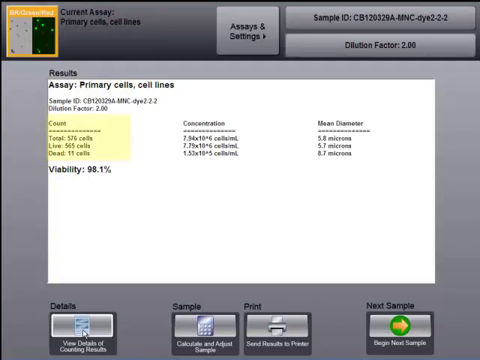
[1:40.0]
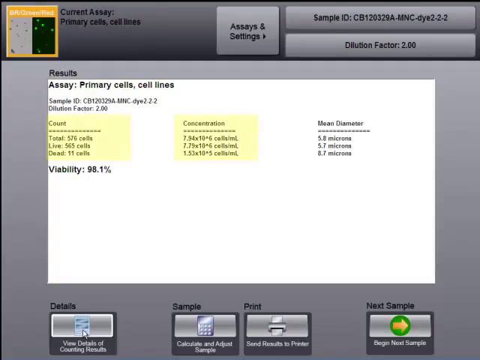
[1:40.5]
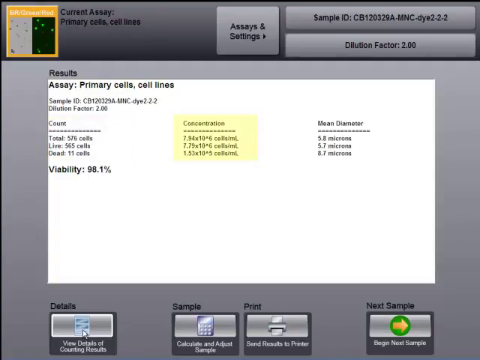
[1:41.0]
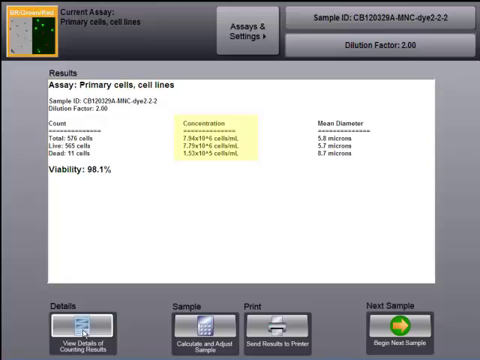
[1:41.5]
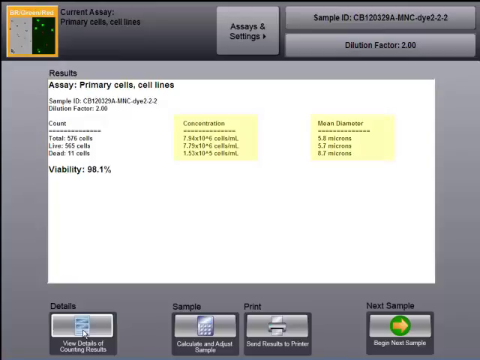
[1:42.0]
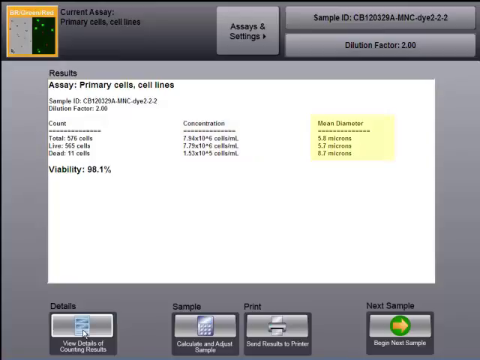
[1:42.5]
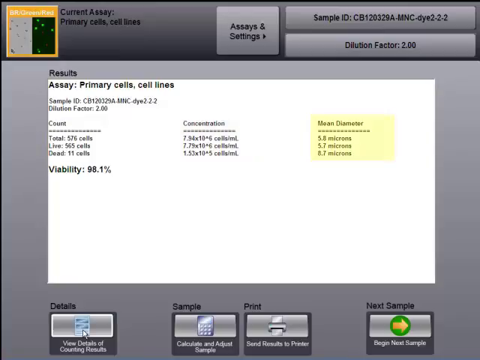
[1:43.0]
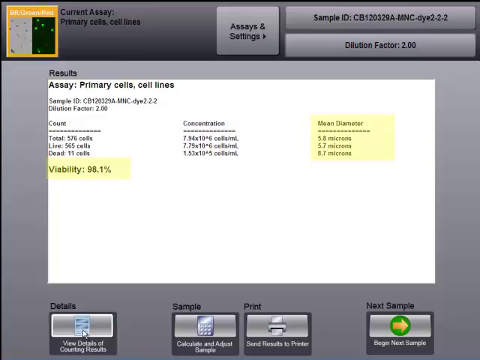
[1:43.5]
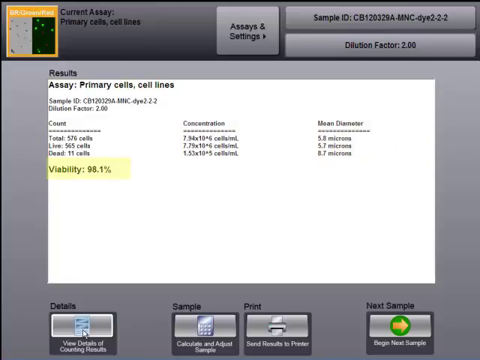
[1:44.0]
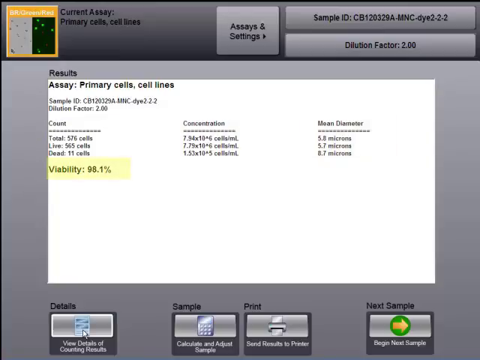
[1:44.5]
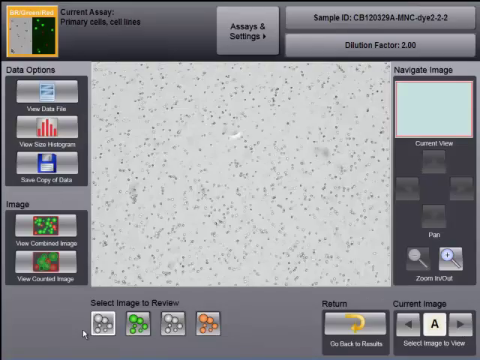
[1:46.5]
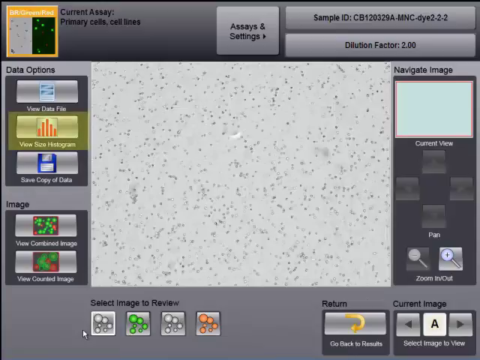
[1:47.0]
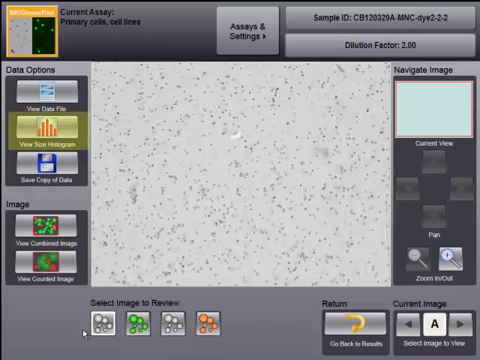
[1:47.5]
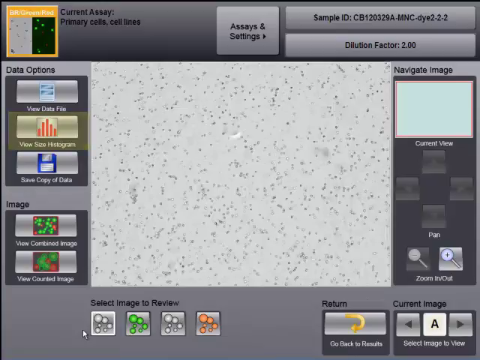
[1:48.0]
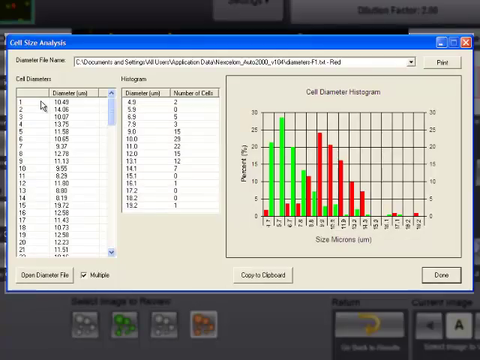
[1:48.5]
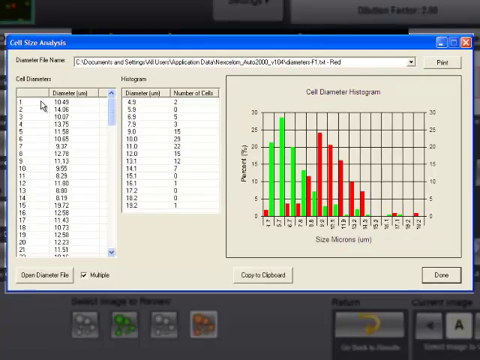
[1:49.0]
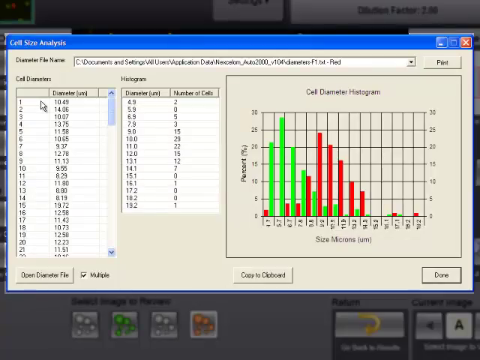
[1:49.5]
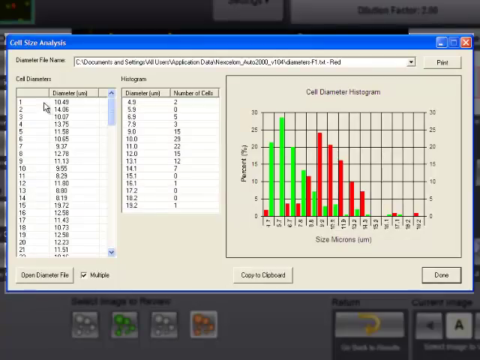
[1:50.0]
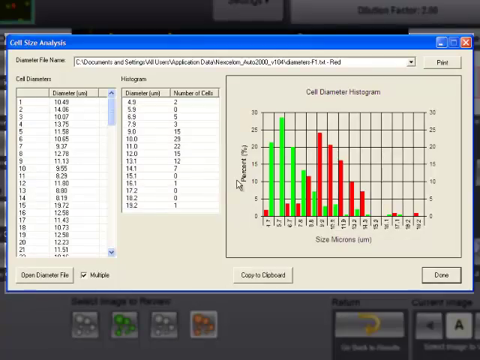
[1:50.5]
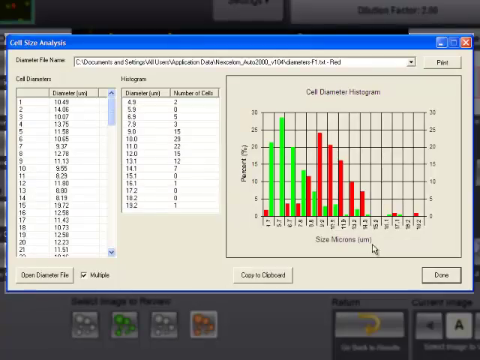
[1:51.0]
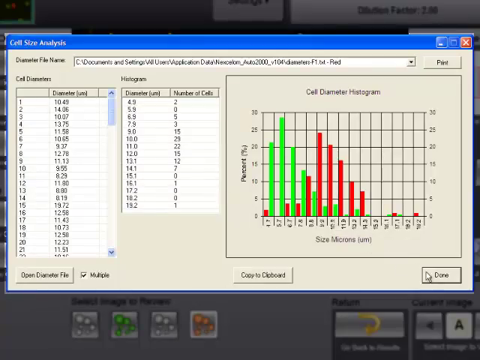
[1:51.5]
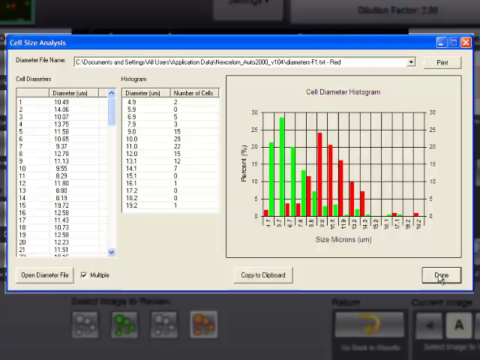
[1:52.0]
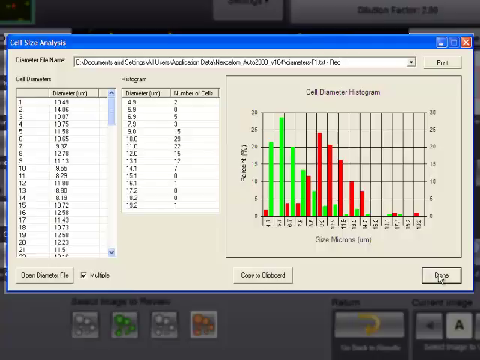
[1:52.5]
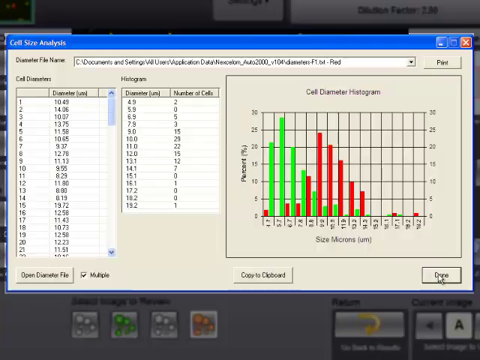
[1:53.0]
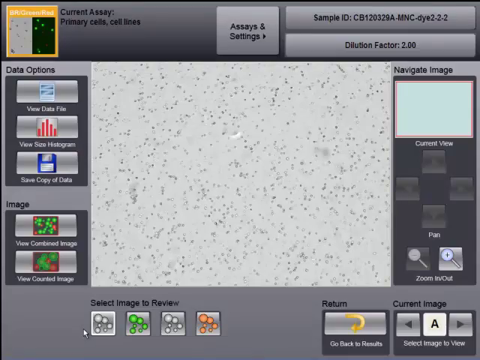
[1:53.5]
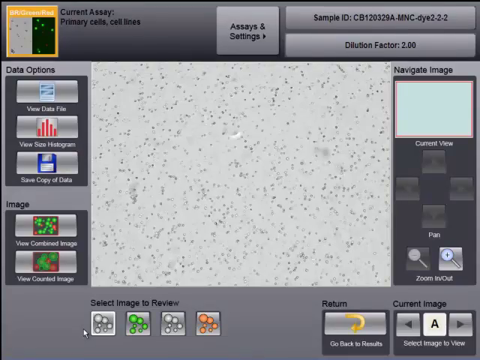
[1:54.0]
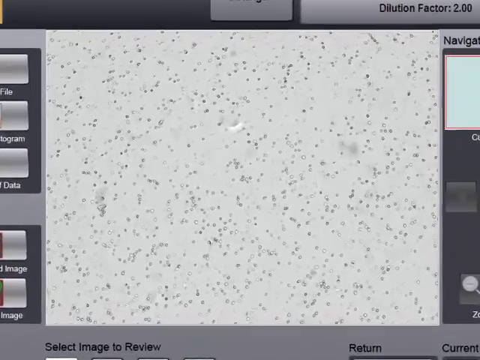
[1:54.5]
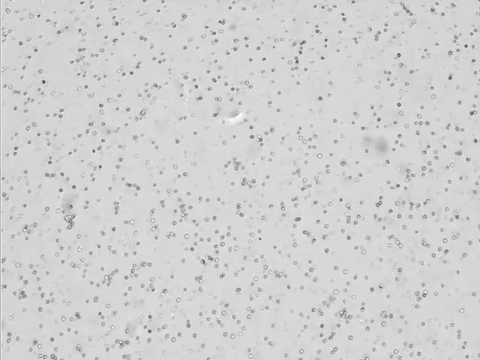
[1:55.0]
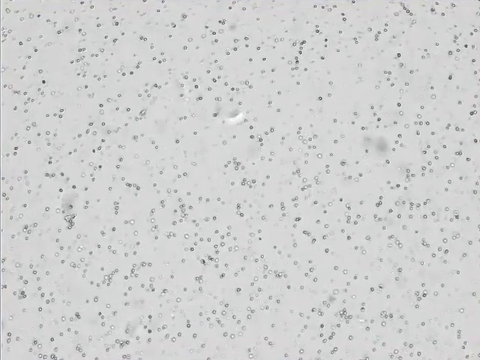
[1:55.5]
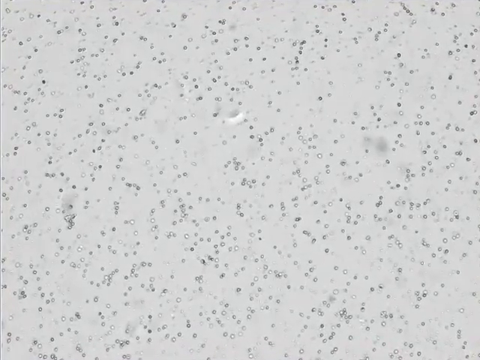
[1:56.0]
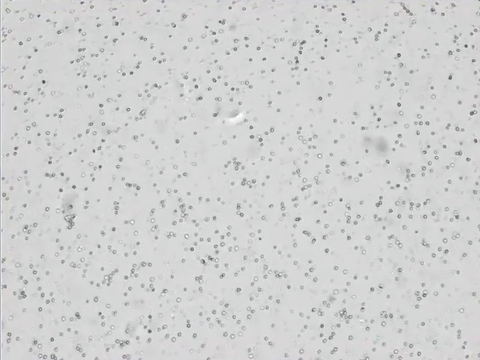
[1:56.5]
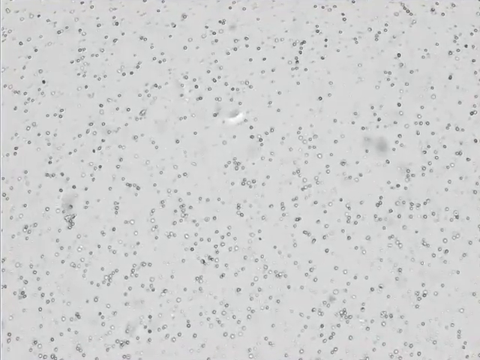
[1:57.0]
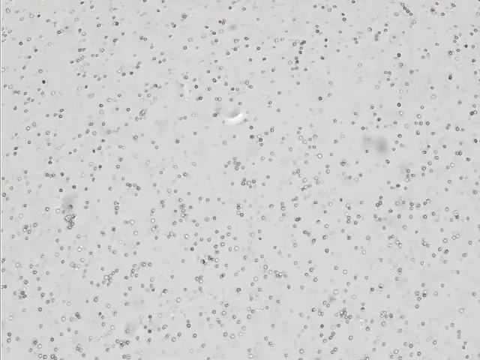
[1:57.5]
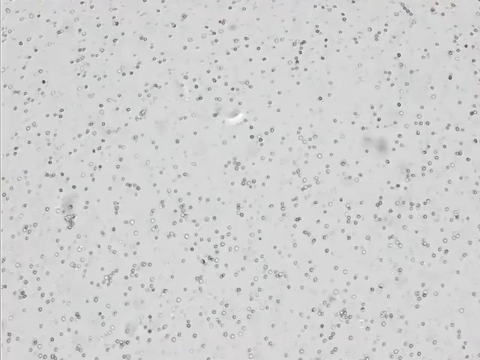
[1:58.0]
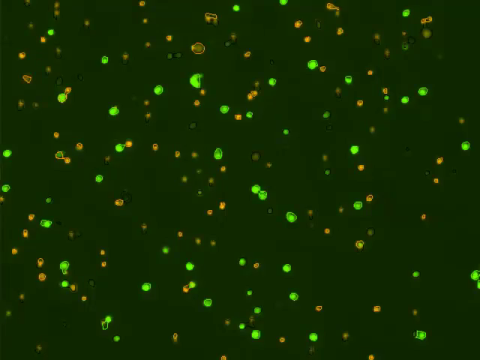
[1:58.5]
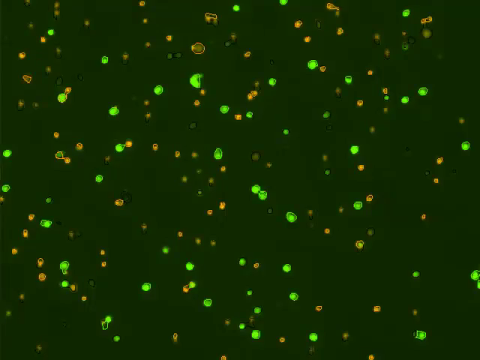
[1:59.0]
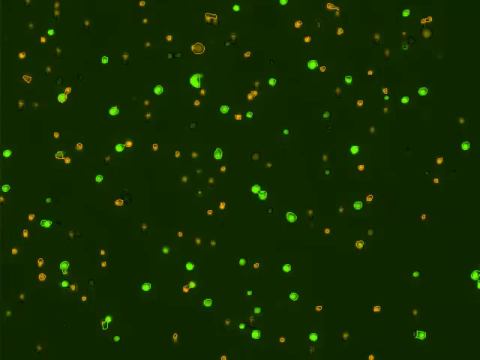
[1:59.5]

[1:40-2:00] The count of live and dead cells in the selected samples appears on a results screen with a white paper motif background. It gives the total cells, the mean concentration in cells per milliliter, around 7 times 10 to the 6th power, and the mean cell diameter, clustering around 5 to 7 microns. A yellow highlight moves over parts of the screen. A cell size analysis window then appears, listing the dimensions of every individual cell captured by the assay, with the diameter in micrometers and a histogram of size showing that larger cells are more likely to be dead and smaller cells more likely to be viable. A mouse cursor clicks a "Done" button in the lower right, and the view zooms in to another look at cells, each microscopically in gray. It then zooms in on cells fluorescing green and others fluorescing red against a dark green background. The assay results appear again with concentration, mean diameter, count and a viability percentage, then the histogram returns, and then a microscopic view of cells already seen is shown once again.